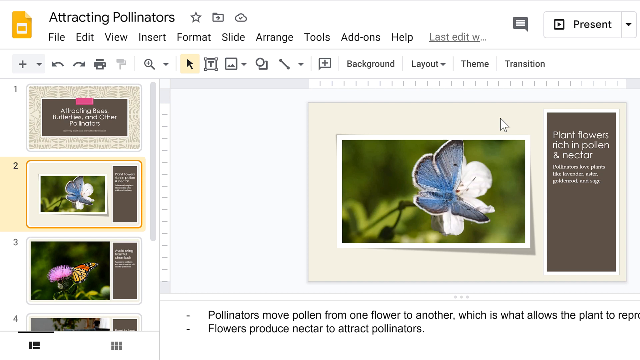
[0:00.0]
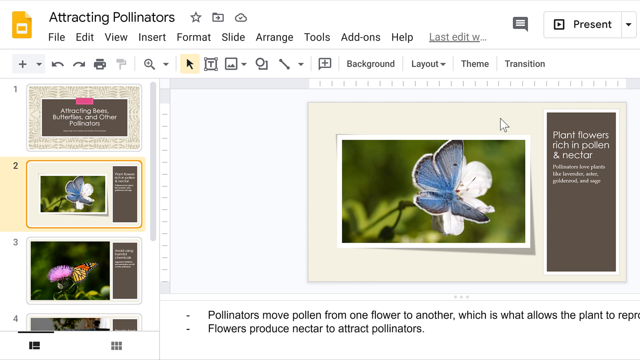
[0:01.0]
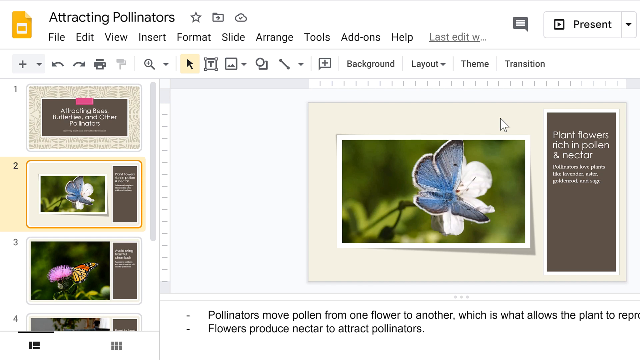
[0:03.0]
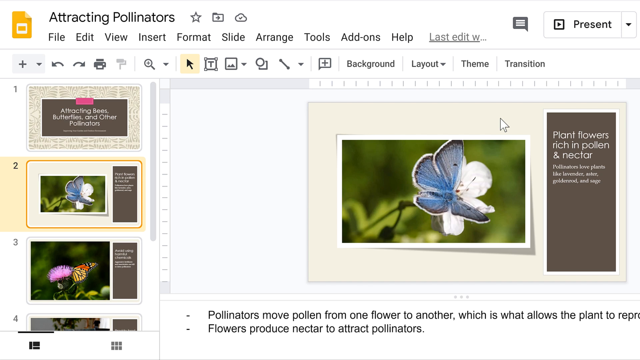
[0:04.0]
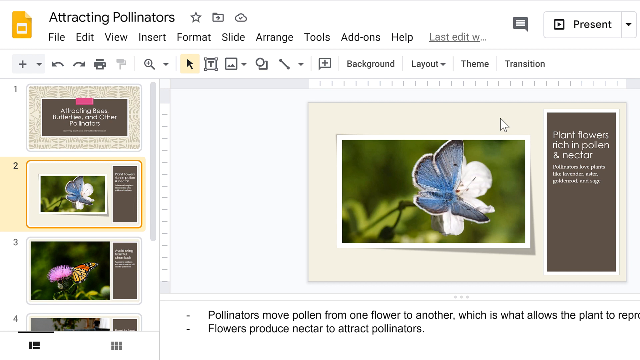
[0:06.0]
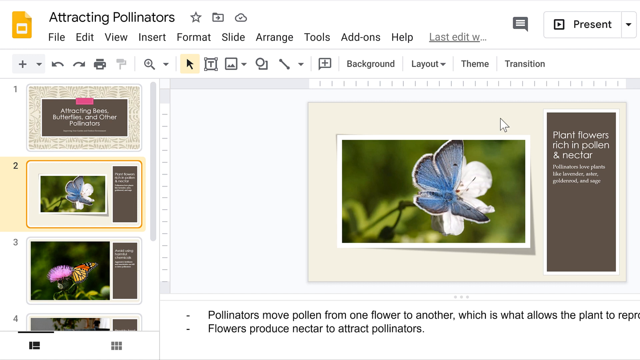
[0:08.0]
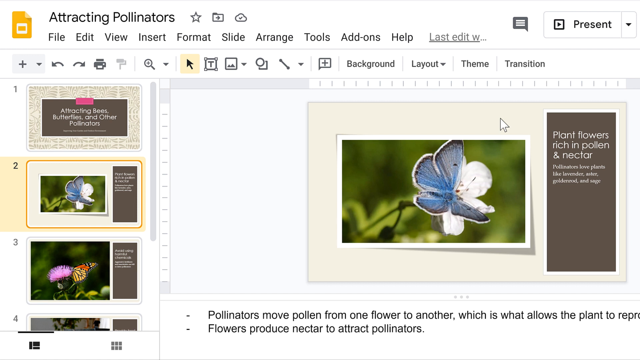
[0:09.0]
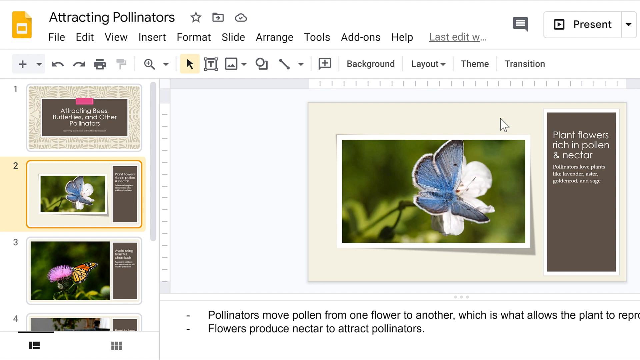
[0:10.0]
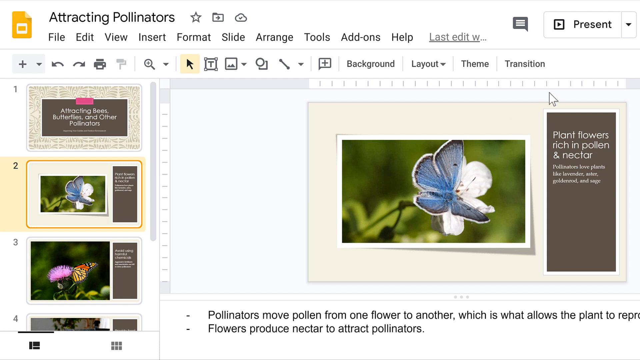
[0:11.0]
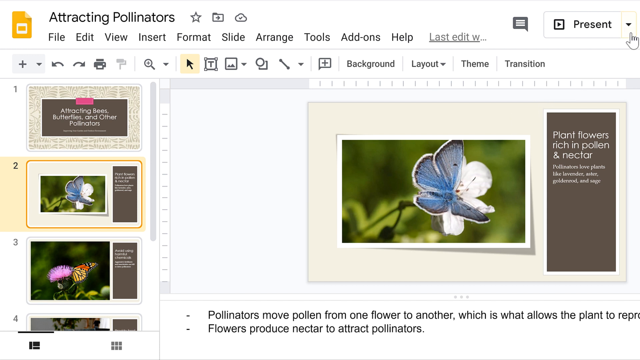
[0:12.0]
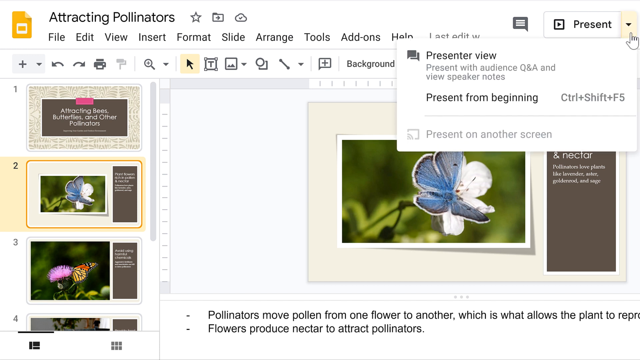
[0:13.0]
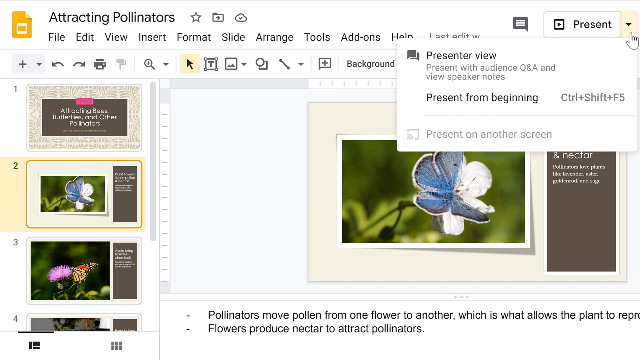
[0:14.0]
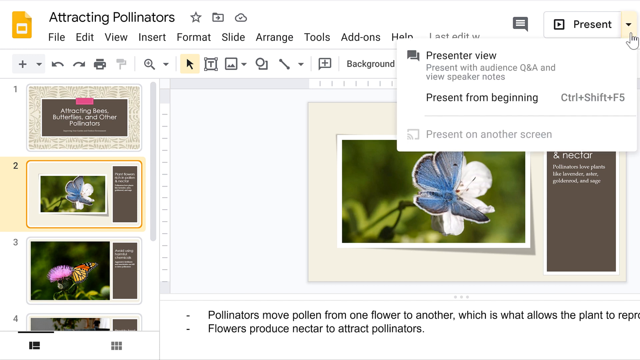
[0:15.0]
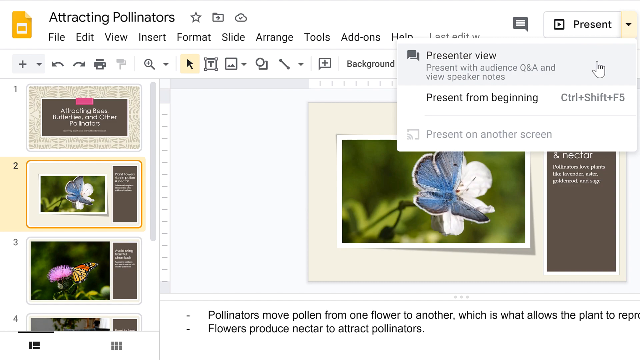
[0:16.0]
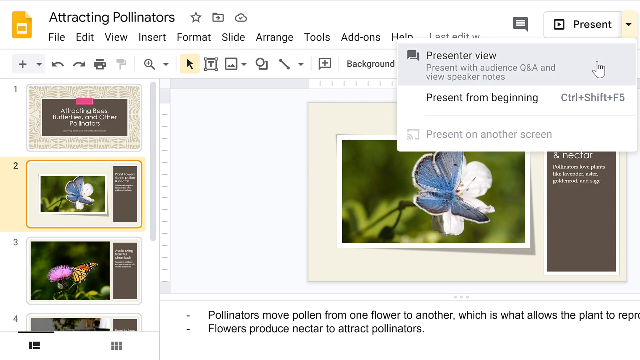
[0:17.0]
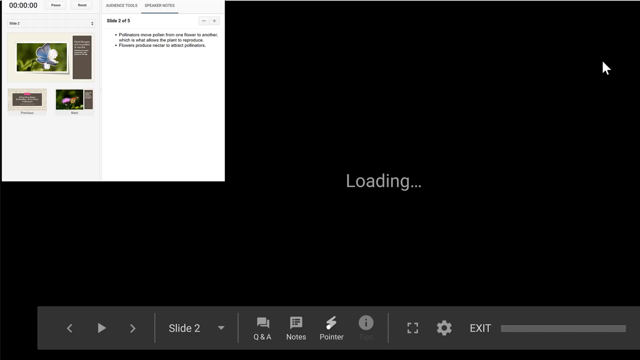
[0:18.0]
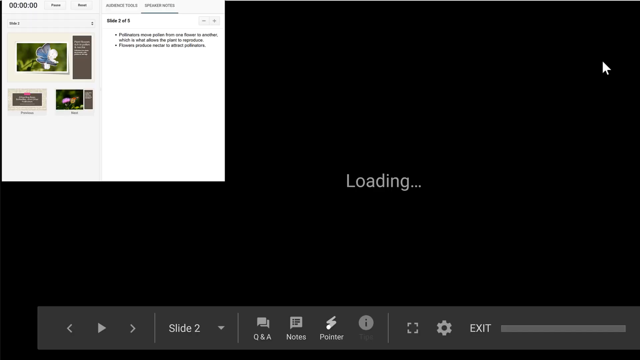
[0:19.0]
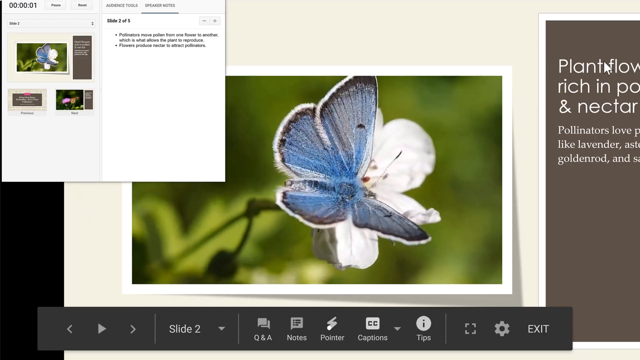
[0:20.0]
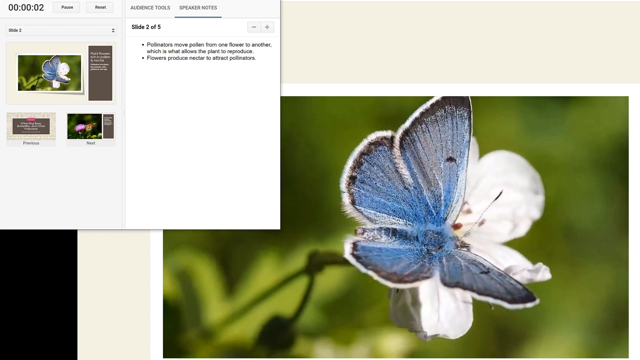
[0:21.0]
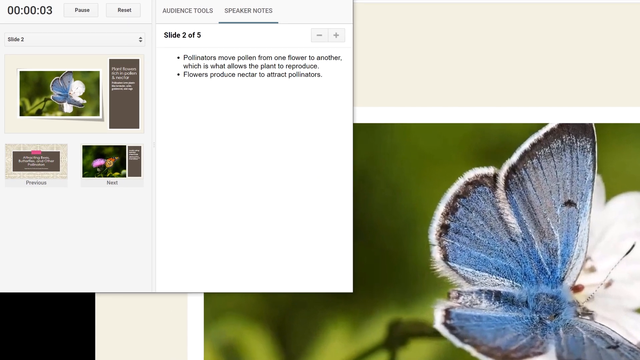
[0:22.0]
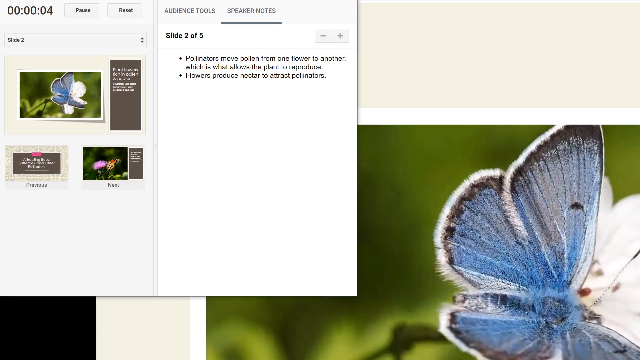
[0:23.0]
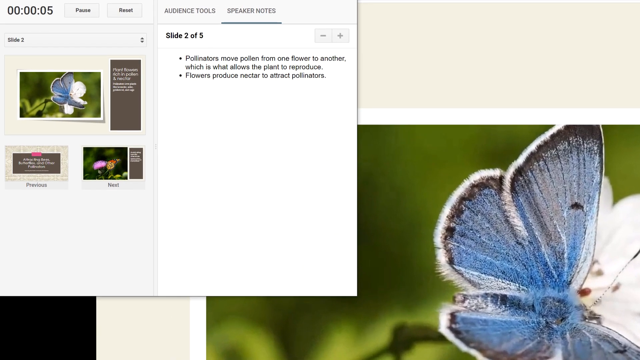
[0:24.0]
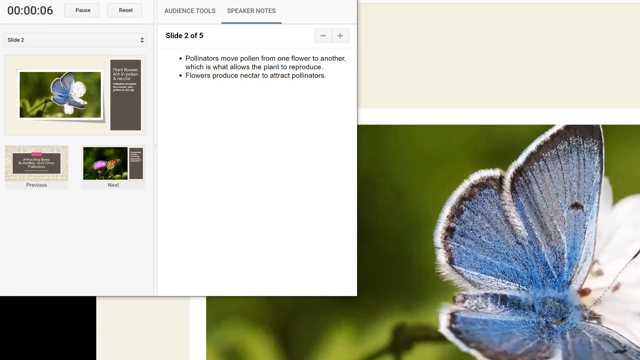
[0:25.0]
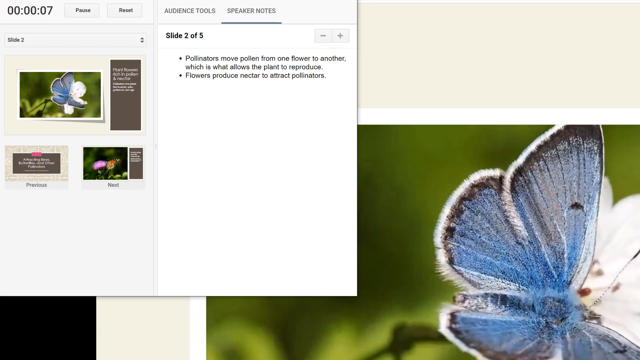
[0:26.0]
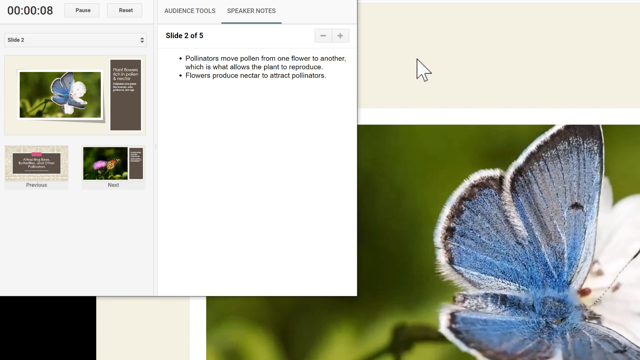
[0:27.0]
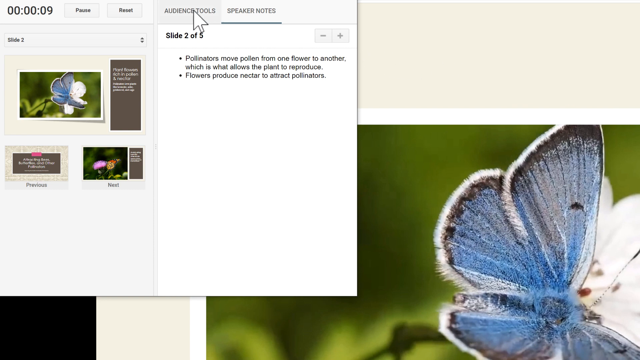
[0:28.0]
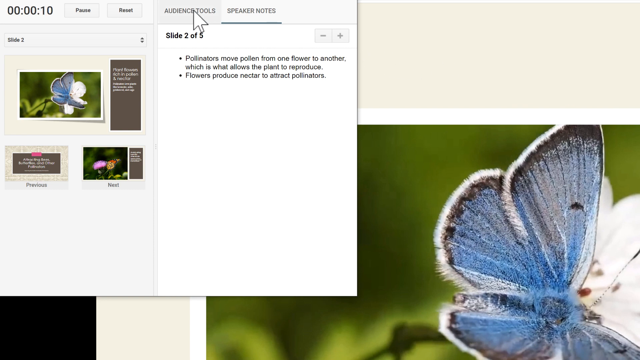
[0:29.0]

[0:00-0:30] A presentation screen is shown with three slides in the left panel; the second is selected and displayed on the main screen. The main slide has a gray background with a picture of a blue butterfly sitting on a white flower against a green background. To the right is a vertical rectangle with text explaining the image, and at the bottom of the slide are two lines written about pollinators. The slide's topic is Attracting Pollinators. The mouse pointer moves upward and clicks the drop-down arrow near Present, revealing a dialog box in which presenter view is clicked. The slide changes, and the main slide alone is shown instead of the screen with the home tab and other tabs. In the top left a small dialog box opens with options, and in it audience tools is selected.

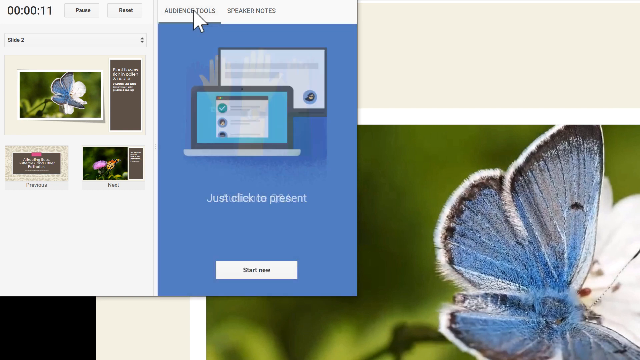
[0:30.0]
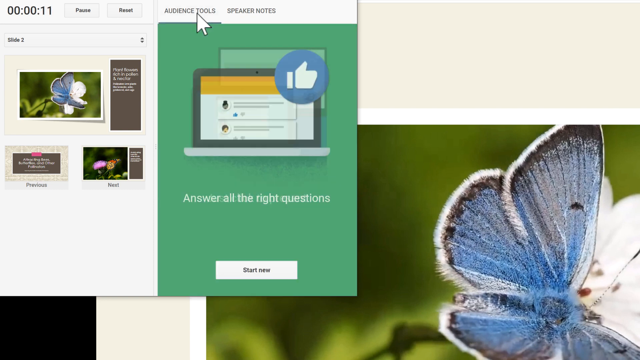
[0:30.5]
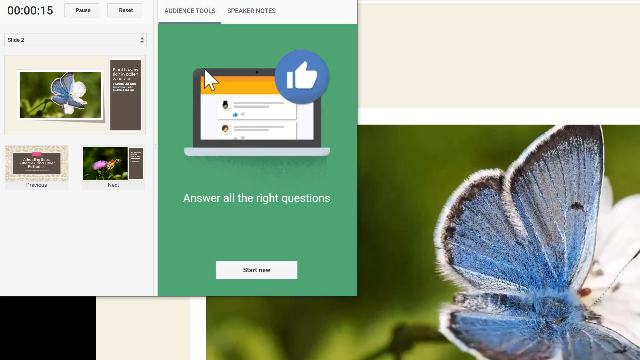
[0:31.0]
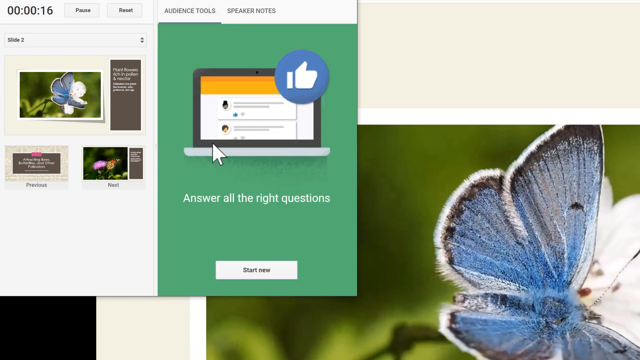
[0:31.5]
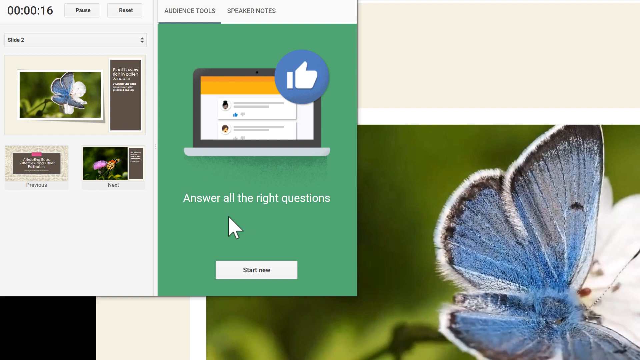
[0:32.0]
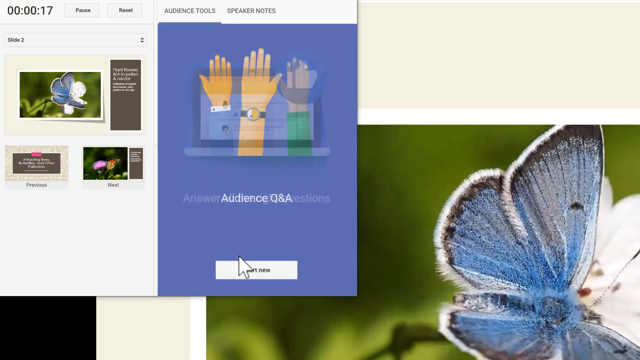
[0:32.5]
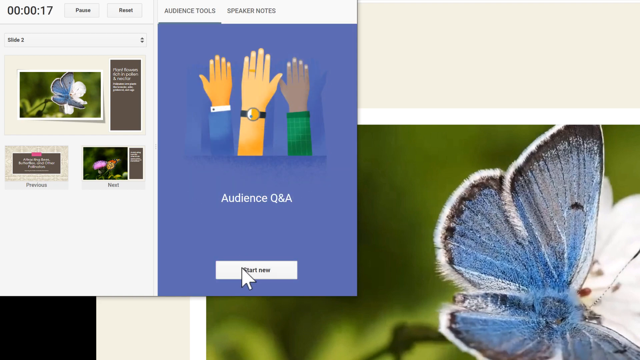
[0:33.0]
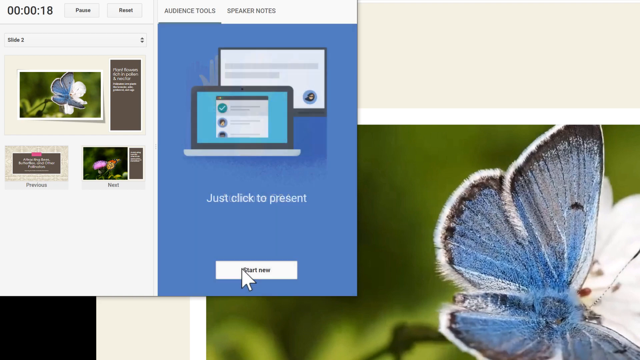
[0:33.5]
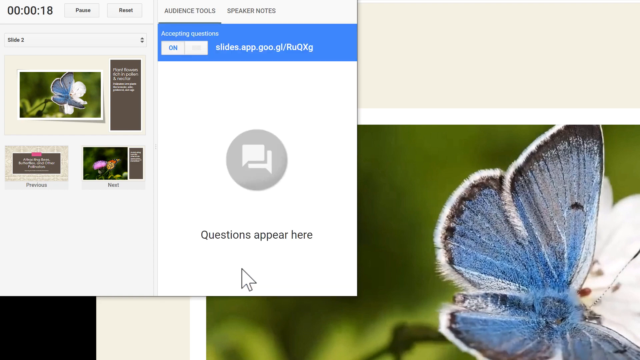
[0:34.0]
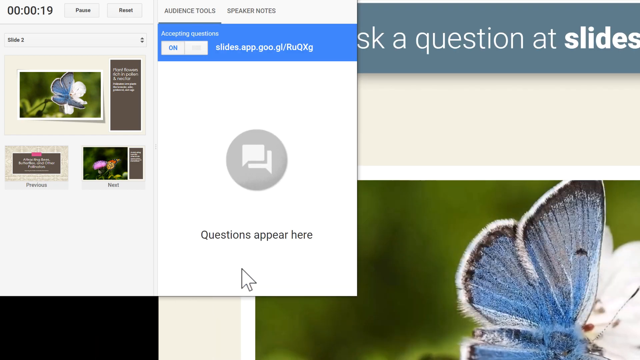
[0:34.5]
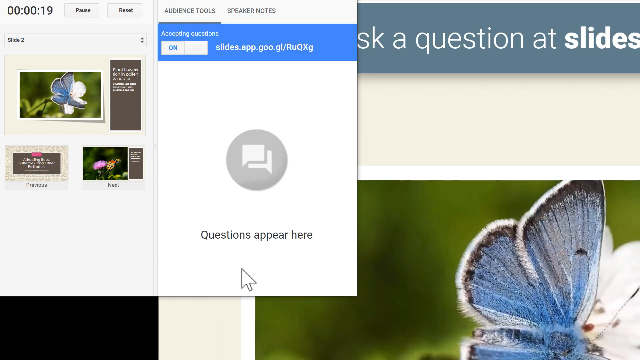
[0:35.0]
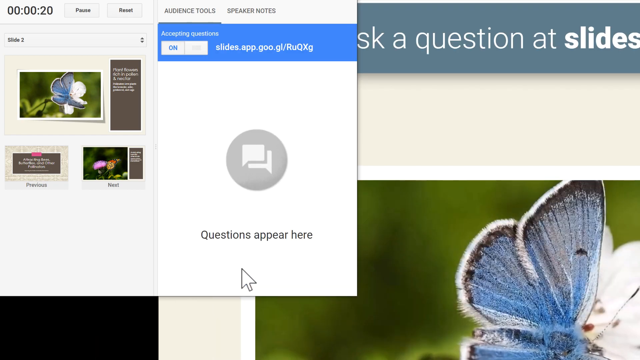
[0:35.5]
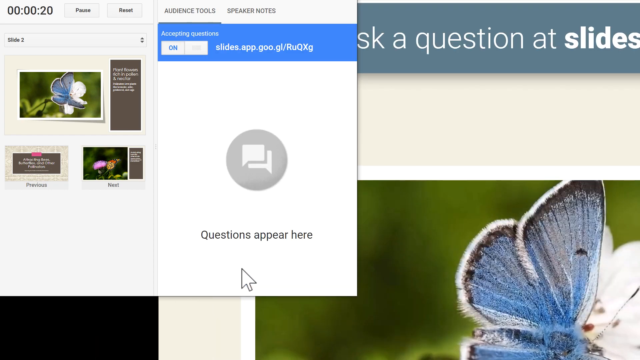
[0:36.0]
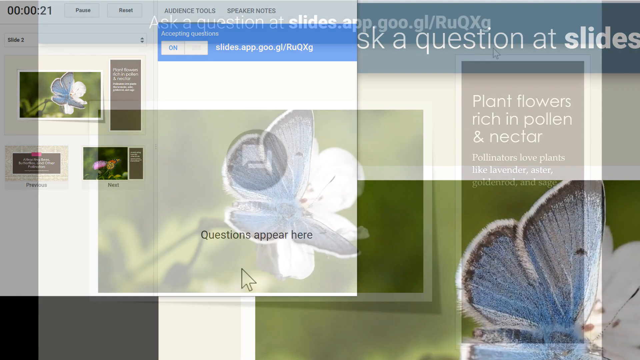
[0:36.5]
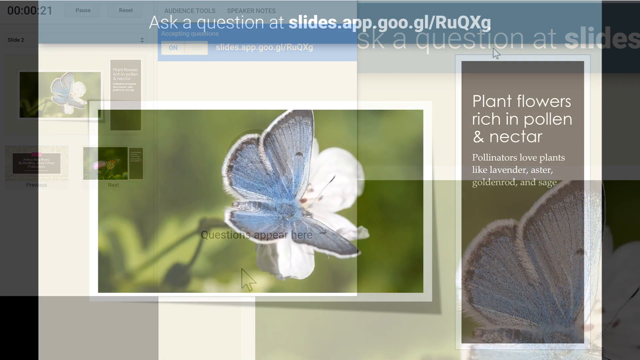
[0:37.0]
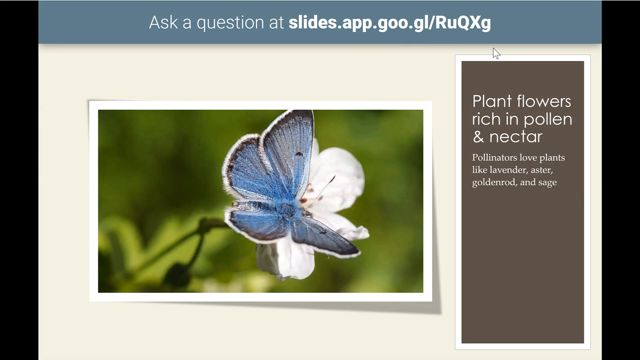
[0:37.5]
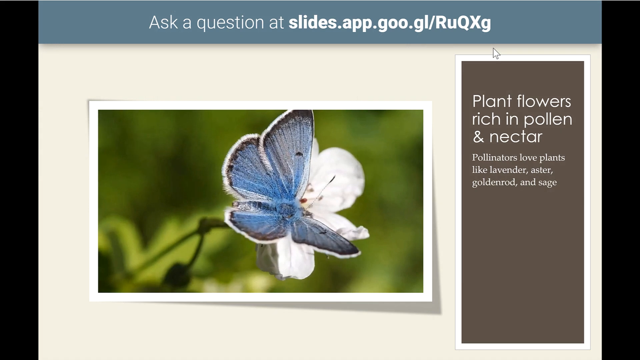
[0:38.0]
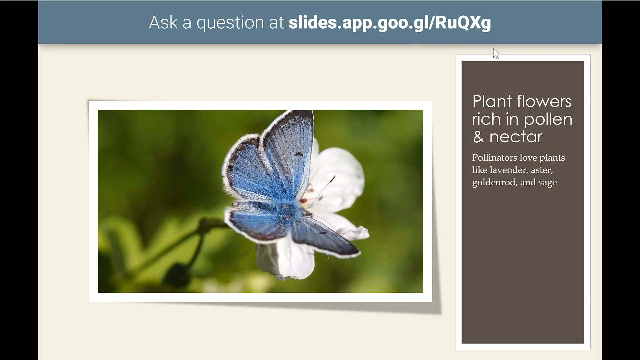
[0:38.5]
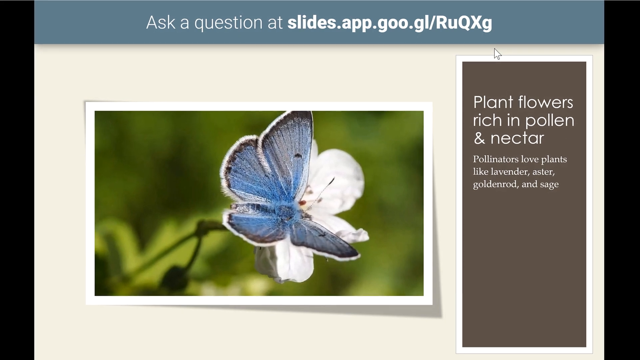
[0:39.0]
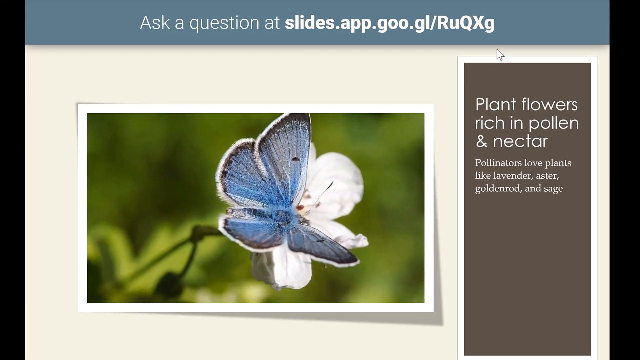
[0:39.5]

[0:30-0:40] A dialog box is in the top left corner, with the presentation screen behind it. In the dialog box the audience tools option is selected, and below it is a section with a green background showing a laptop icon, with a thumbs-up symbol in a blue circle at the top right of the laptop. Below that, "answer all the right question" is written, and below the text is a "start now" button. The laptop icon changes into three hands that cast shadows, with "audience Q&A" written below. The mouse pointer moves to the start now button and clicks it. The main screen is then shown, with an image of a butterfly sitting on a white flower and some information written in a rectangle to its right. Above these images, "ask a question" followed by a URL appears in a blue band.